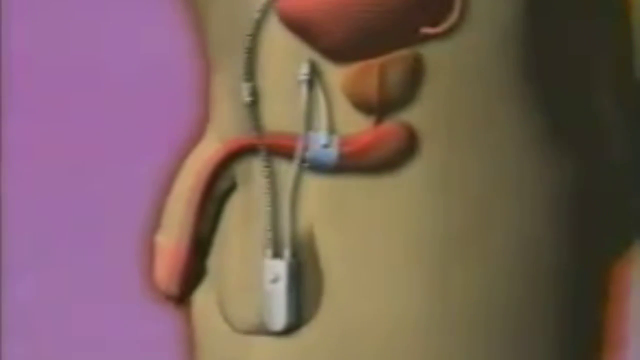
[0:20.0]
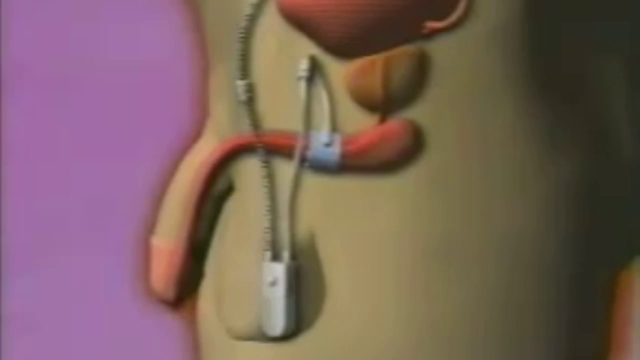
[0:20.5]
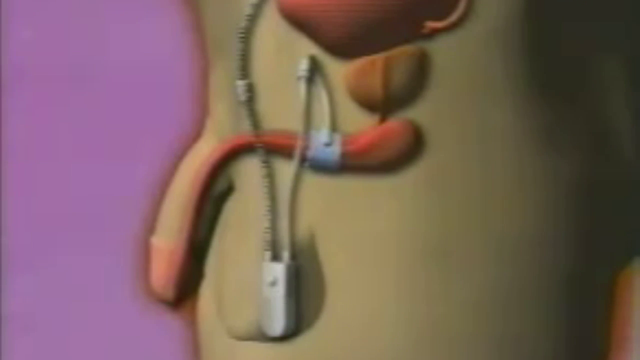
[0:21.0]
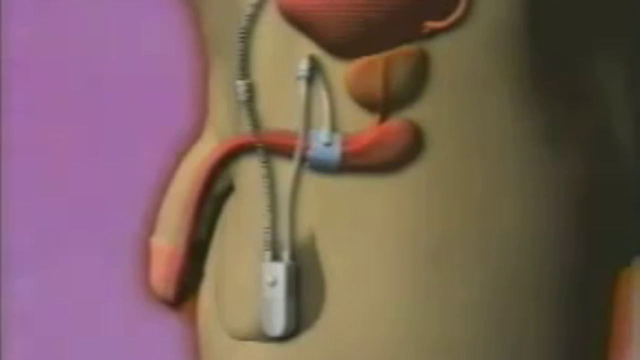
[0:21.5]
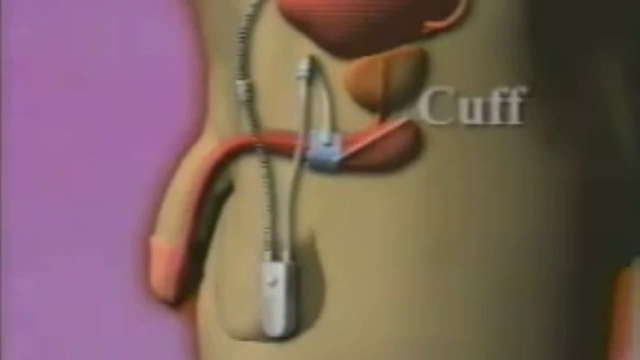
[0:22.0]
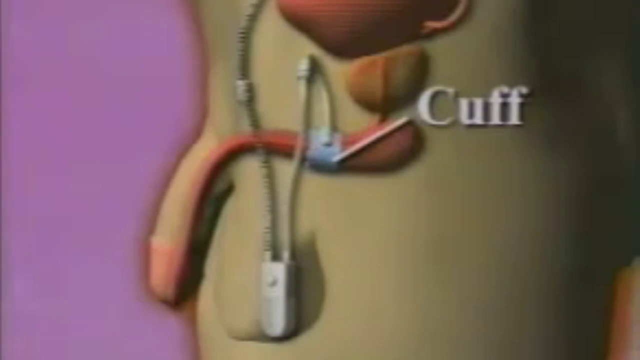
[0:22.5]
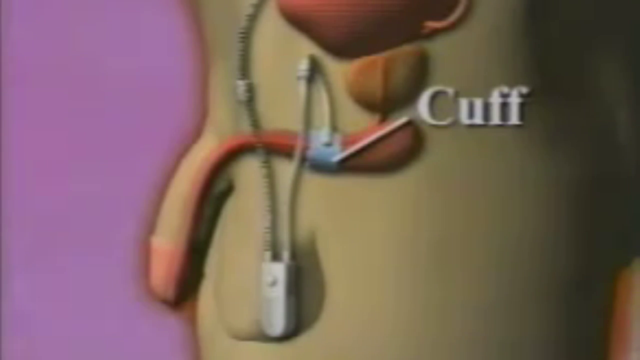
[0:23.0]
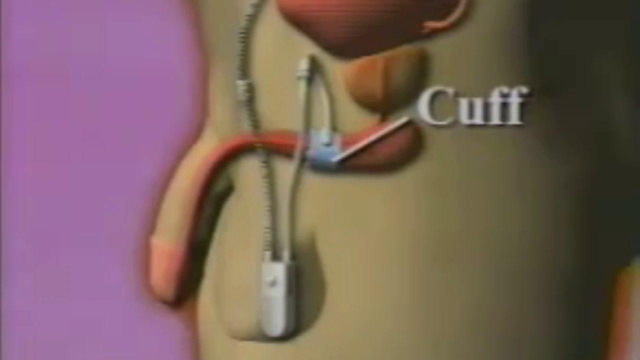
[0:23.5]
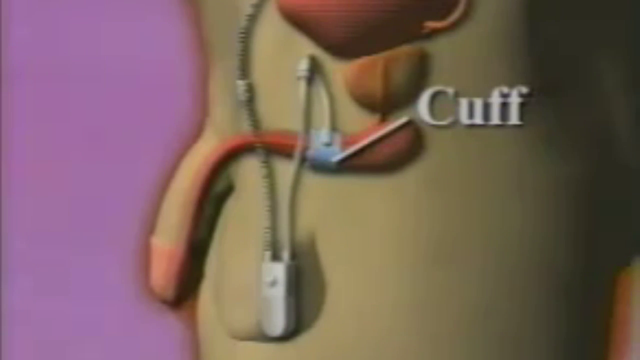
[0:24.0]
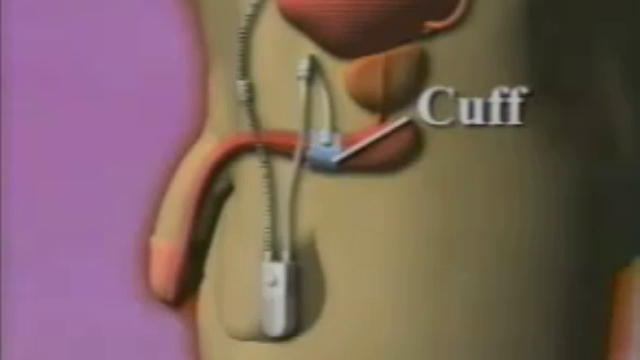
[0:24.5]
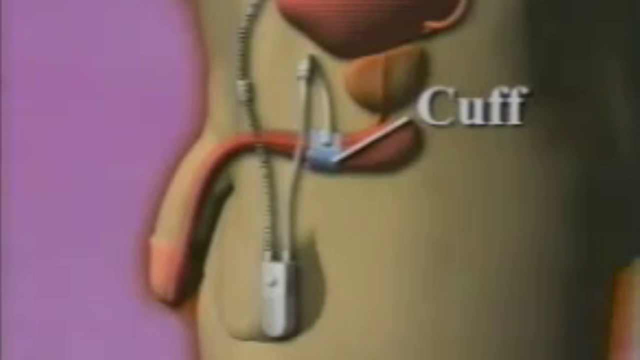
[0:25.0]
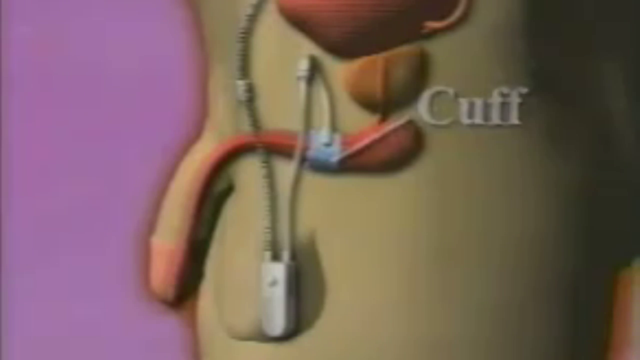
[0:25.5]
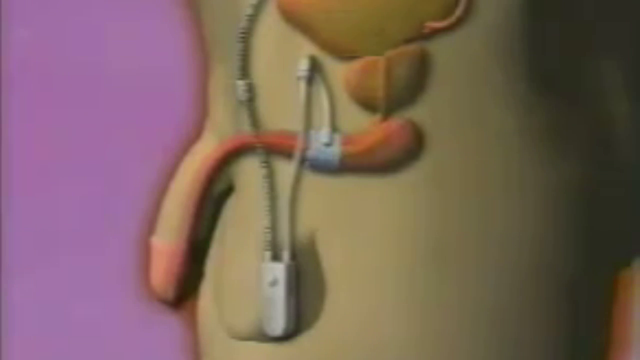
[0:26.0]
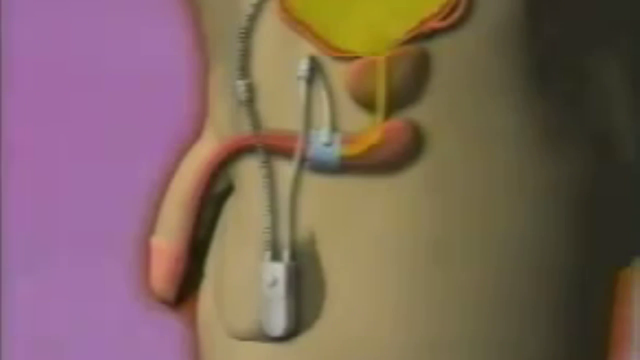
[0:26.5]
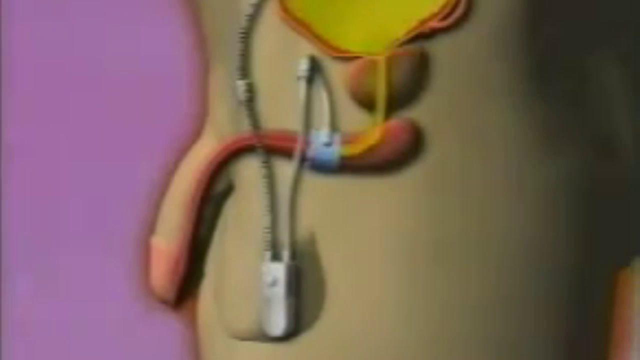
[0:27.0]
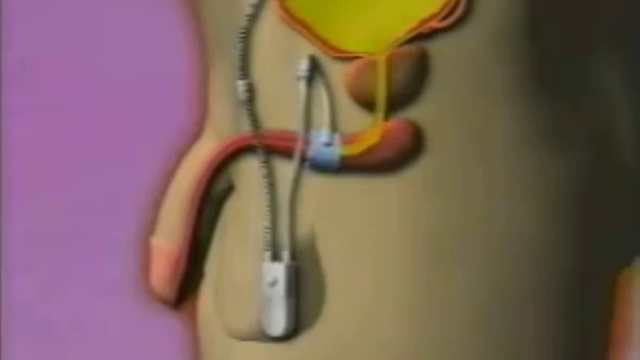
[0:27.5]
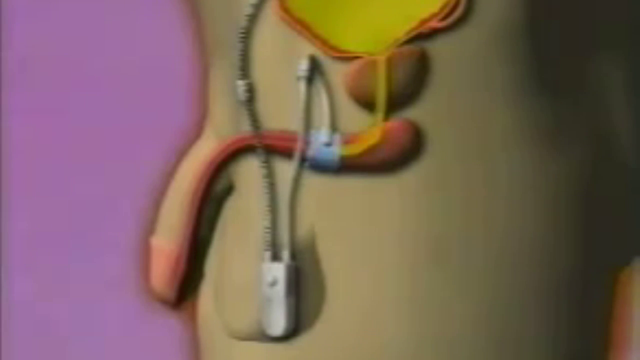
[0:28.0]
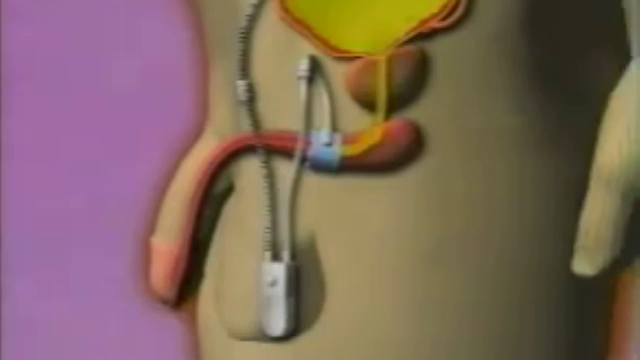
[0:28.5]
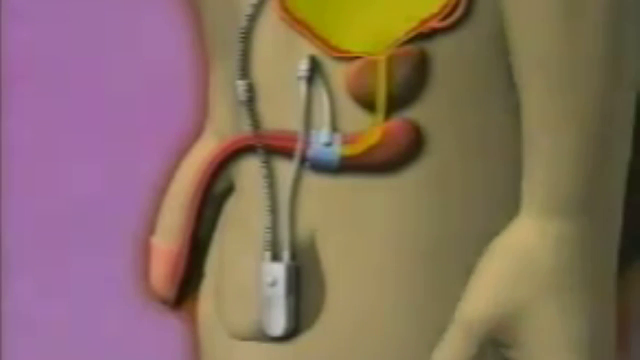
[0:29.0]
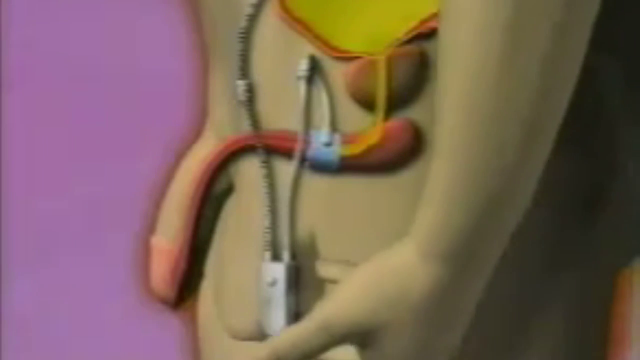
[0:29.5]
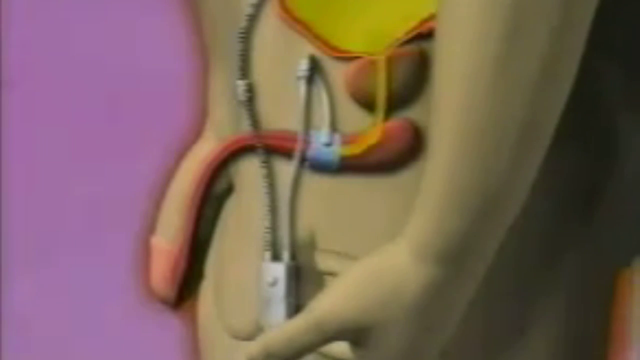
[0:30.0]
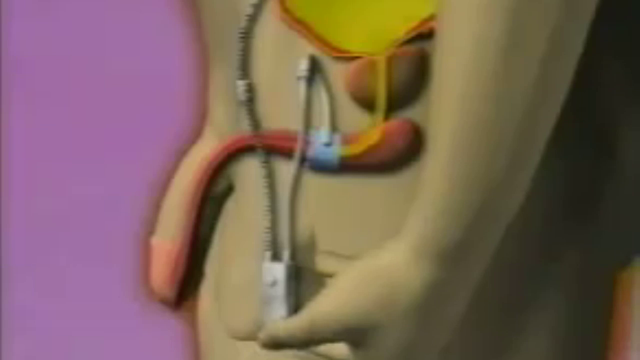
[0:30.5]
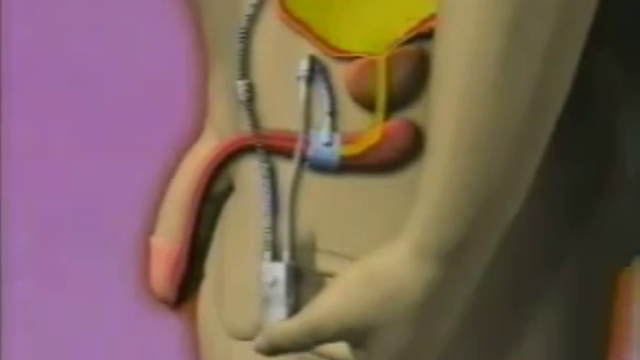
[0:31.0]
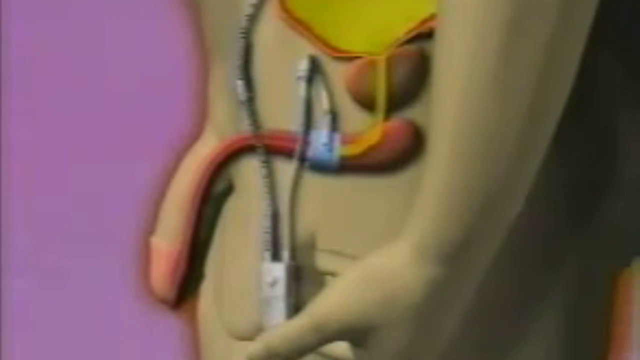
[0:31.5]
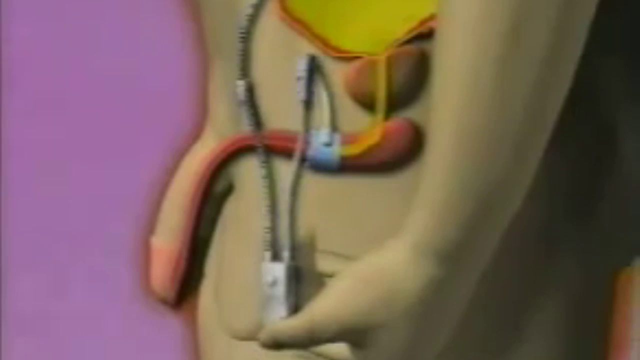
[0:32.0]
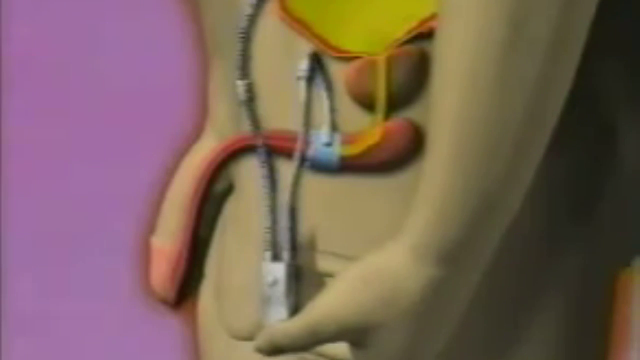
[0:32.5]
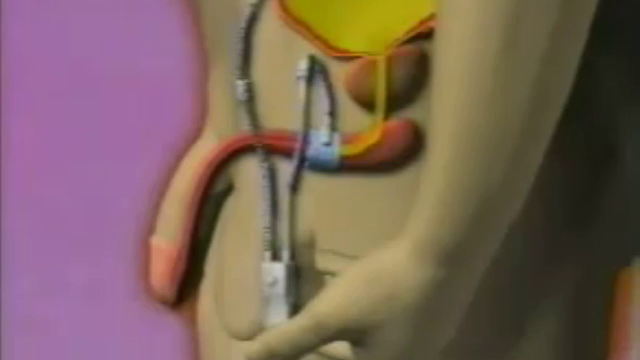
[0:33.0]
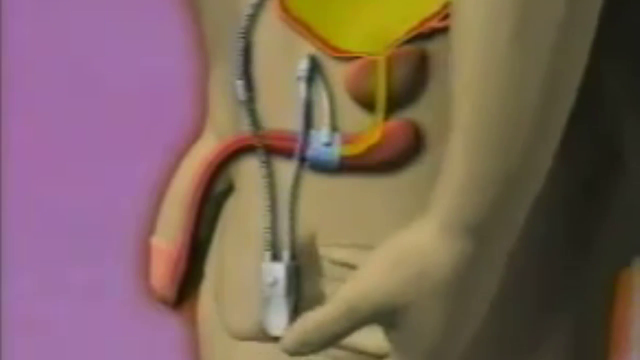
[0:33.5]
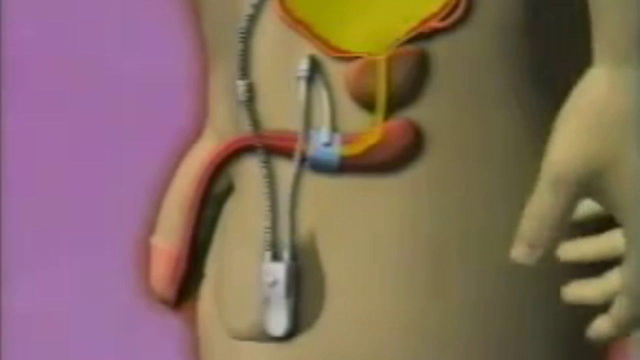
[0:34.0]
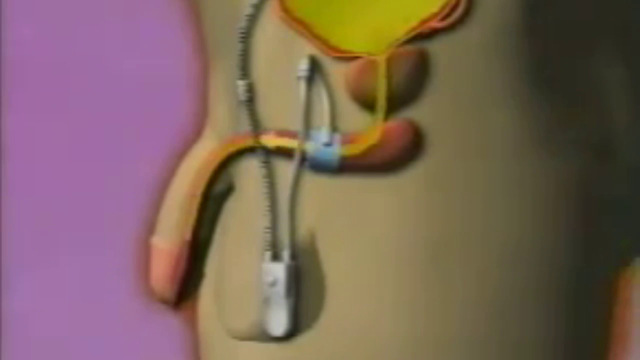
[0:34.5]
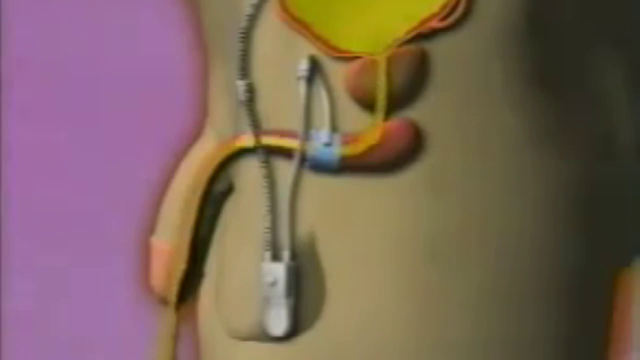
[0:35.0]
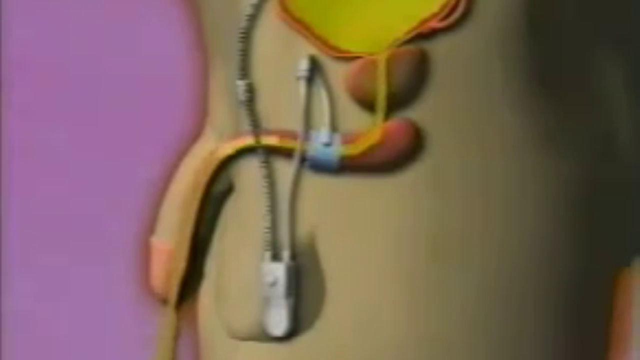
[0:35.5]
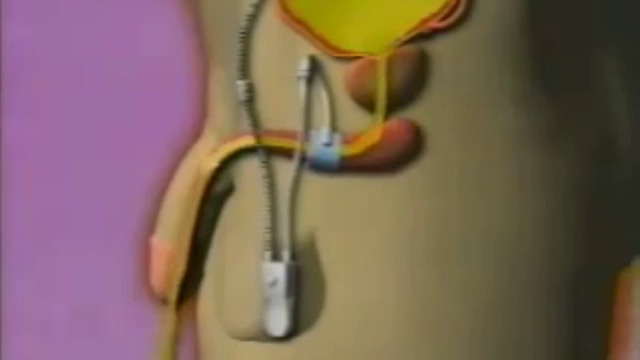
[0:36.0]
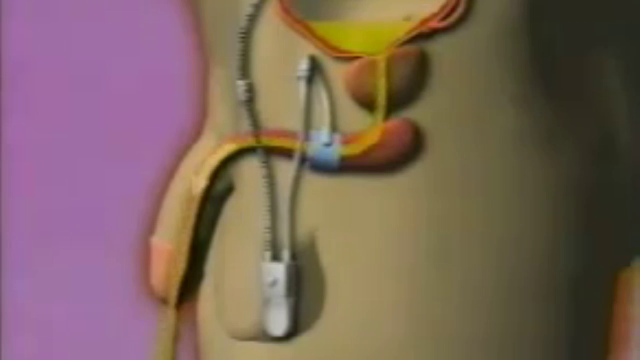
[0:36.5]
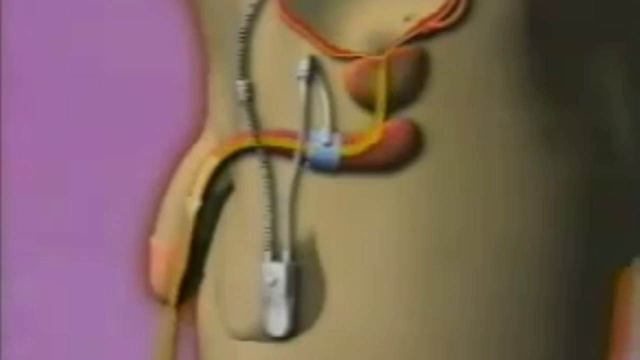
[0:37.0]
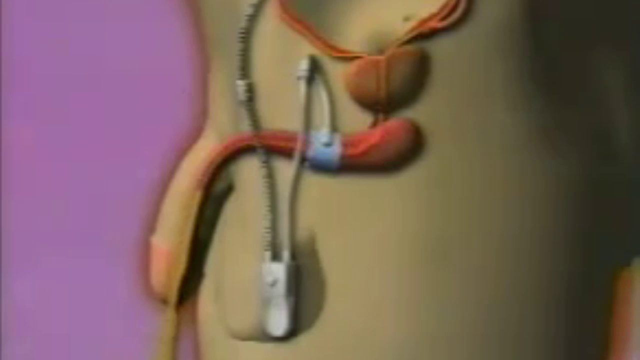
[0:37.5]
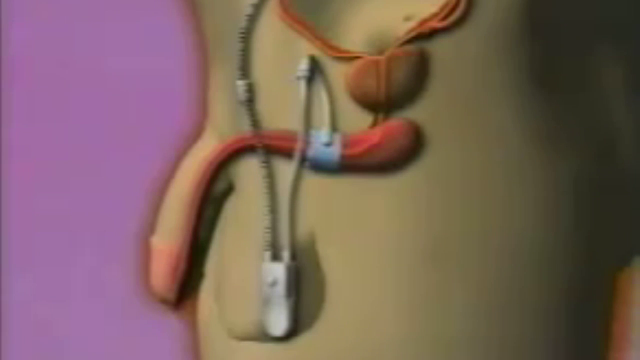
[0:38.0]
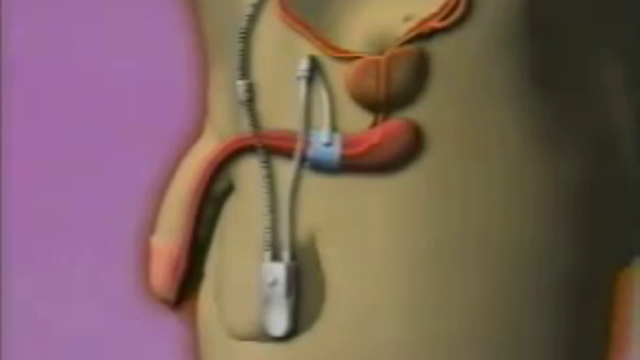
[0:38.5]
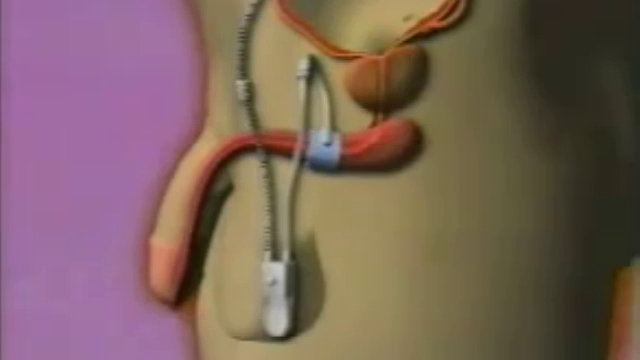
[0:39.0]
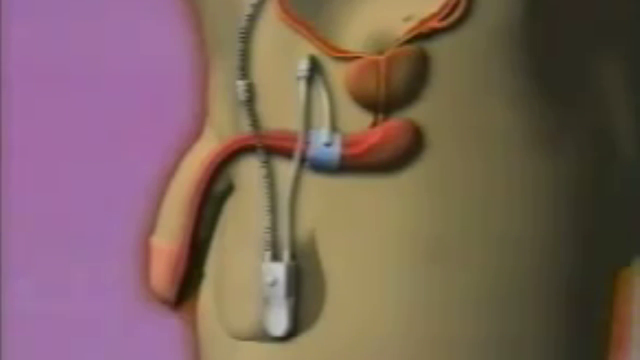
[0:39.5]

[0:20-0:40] The animation of the male anatomy continues, shown from a side angle. A specific area is labeled "cuff" in white words. A specific part at the top is then highlighted in yellow. Several lines appear where the male anatomy is, moving in different colors such as yellow, red and orange. The video is rectangular and completely computer generated, and the quality is not the best. Next to the male anatomy is a solid purple background. There are no animals present. The male anatomy is colored red, light brown, orange and blue.